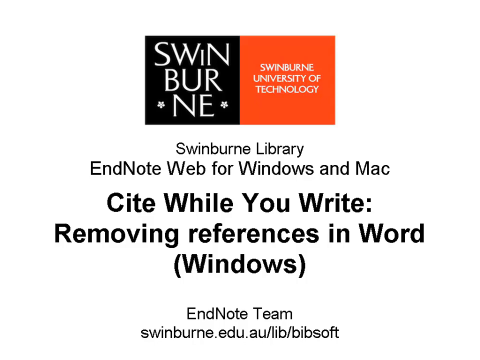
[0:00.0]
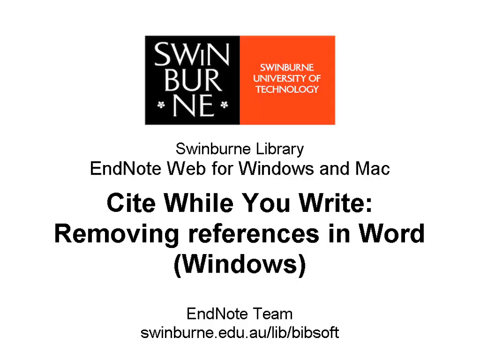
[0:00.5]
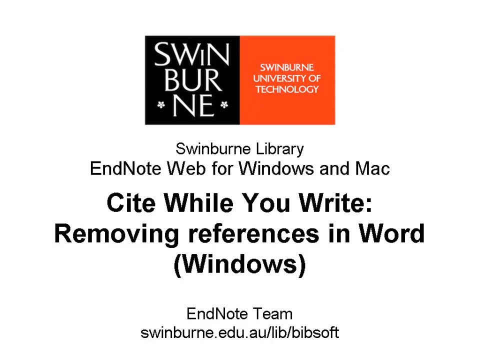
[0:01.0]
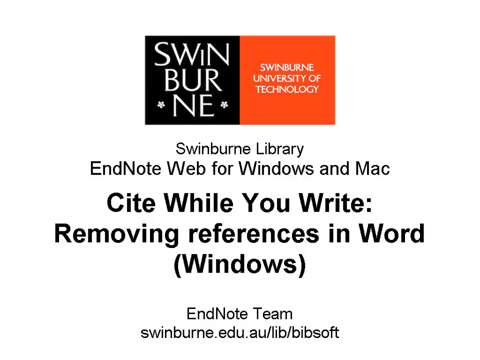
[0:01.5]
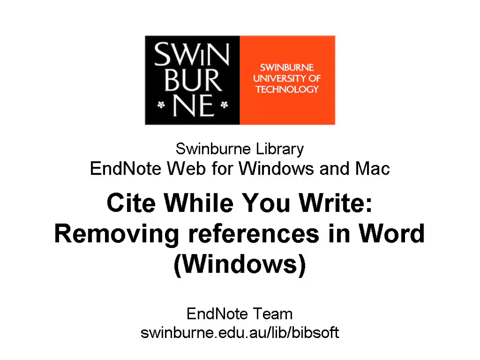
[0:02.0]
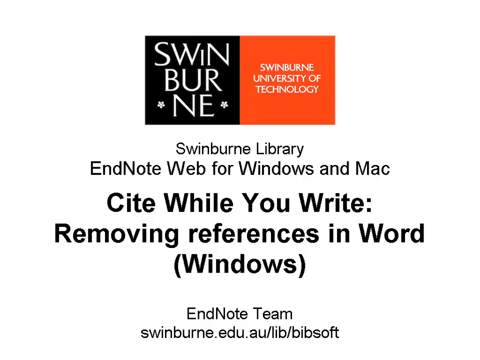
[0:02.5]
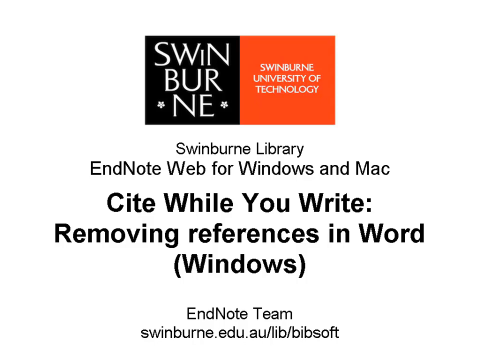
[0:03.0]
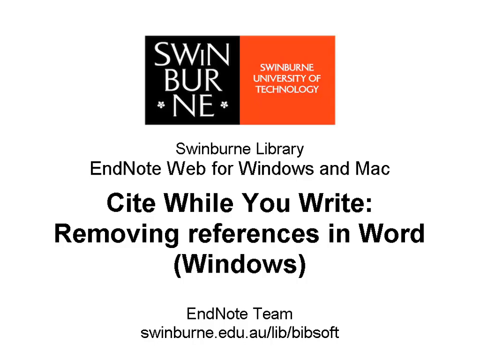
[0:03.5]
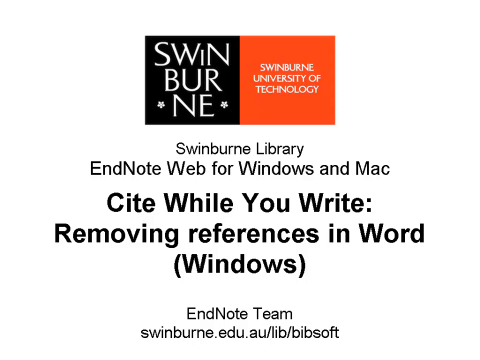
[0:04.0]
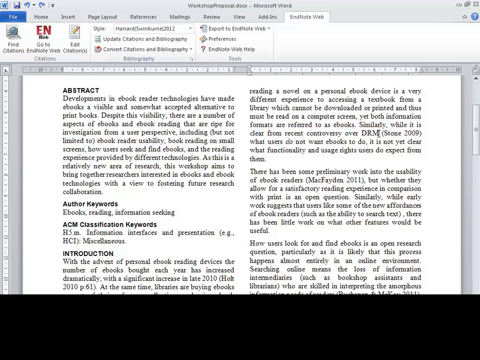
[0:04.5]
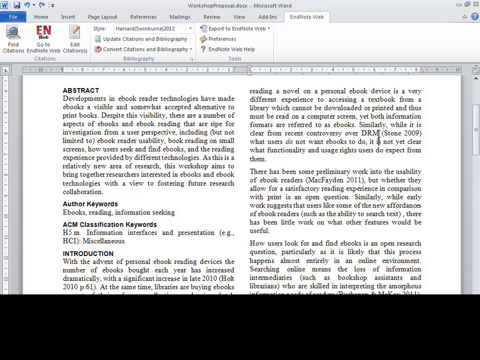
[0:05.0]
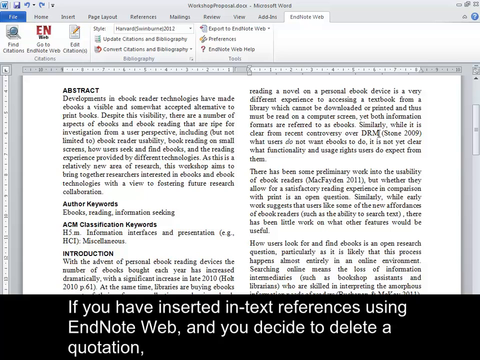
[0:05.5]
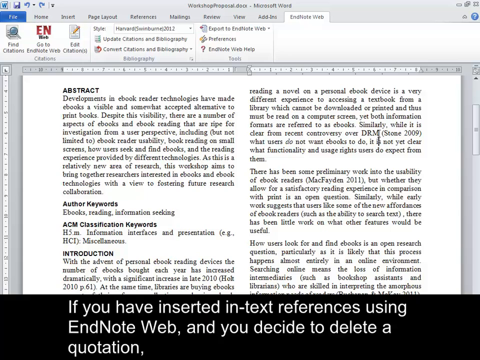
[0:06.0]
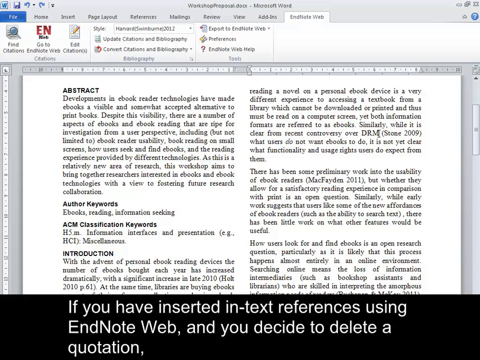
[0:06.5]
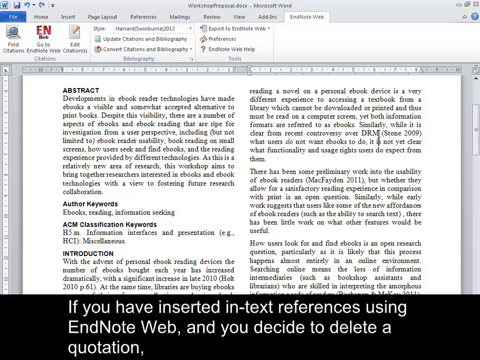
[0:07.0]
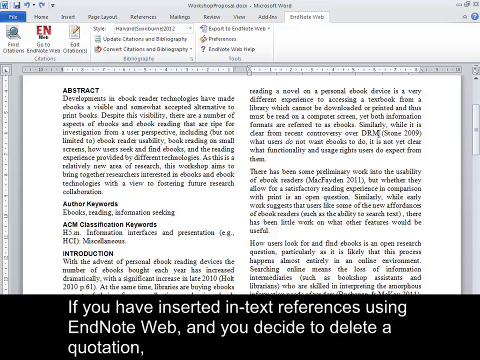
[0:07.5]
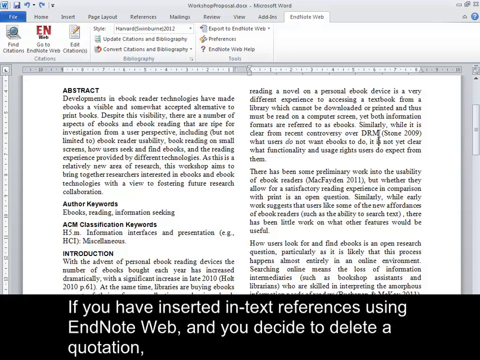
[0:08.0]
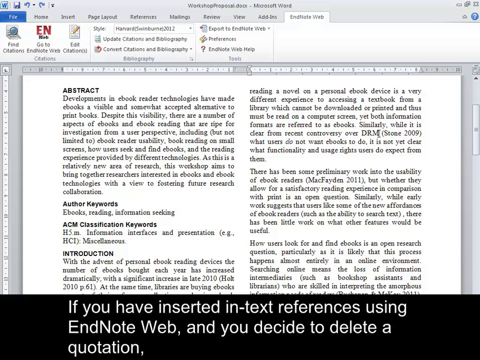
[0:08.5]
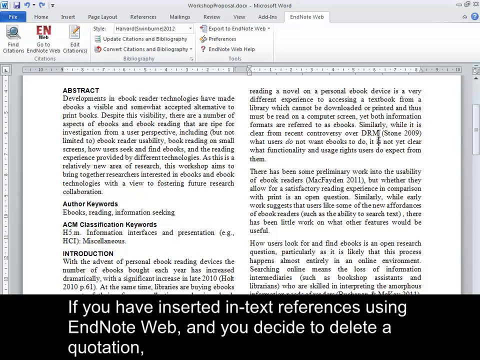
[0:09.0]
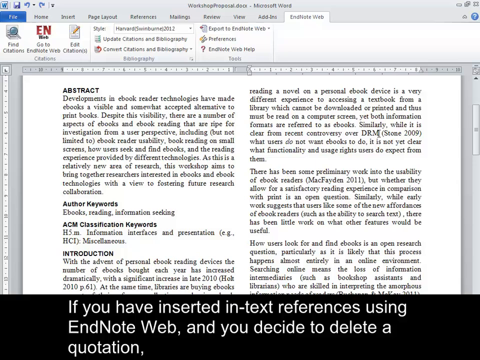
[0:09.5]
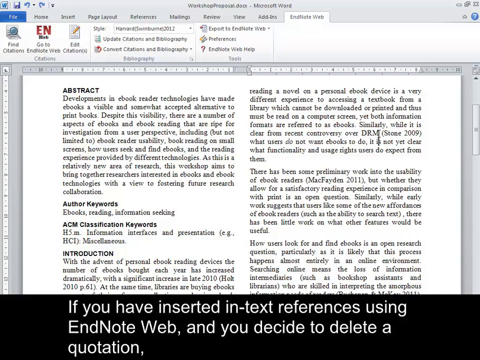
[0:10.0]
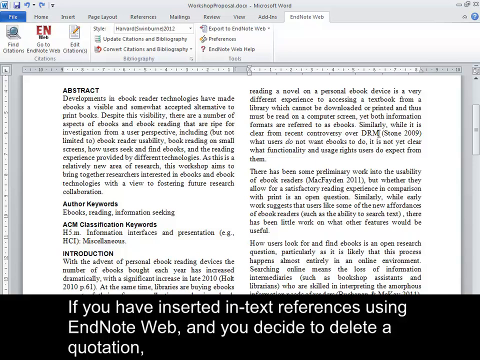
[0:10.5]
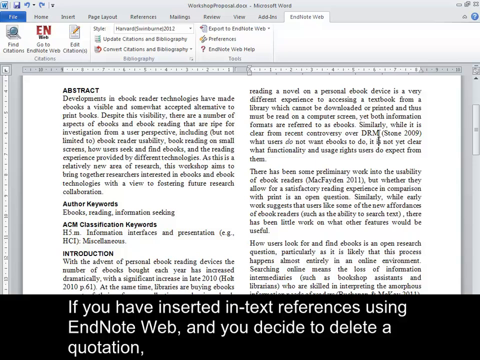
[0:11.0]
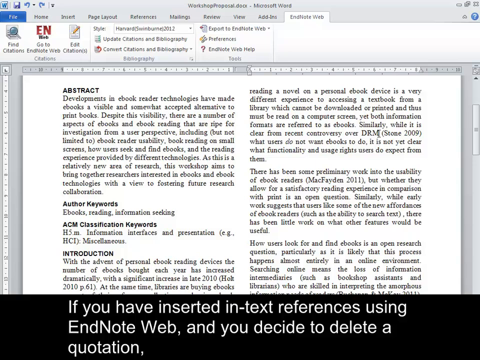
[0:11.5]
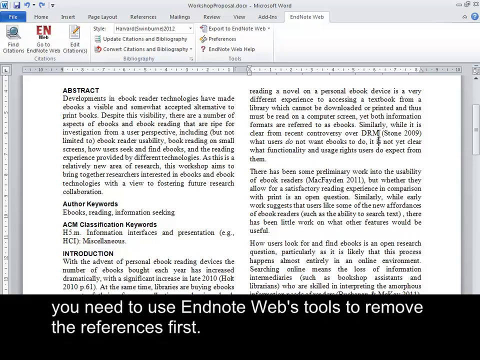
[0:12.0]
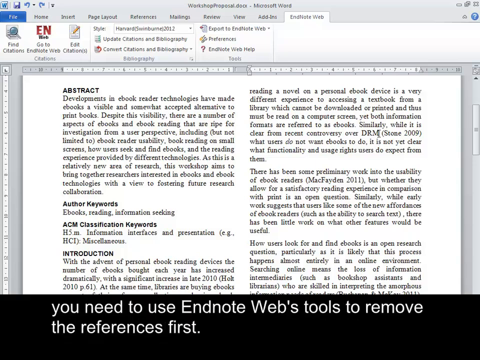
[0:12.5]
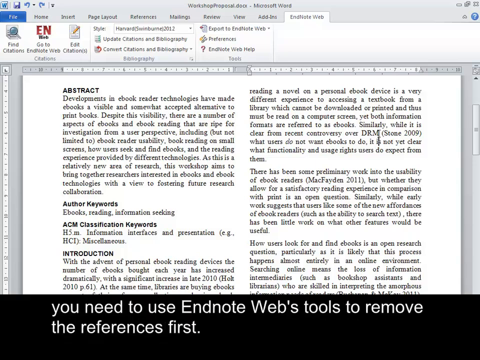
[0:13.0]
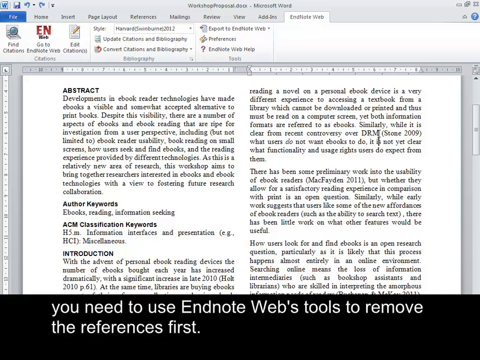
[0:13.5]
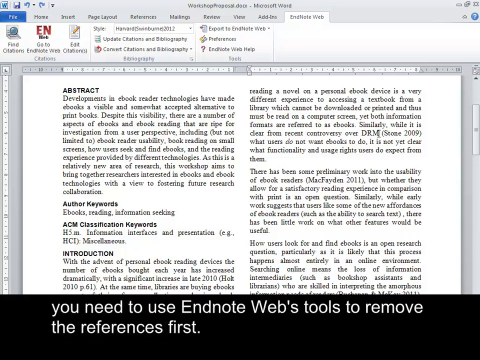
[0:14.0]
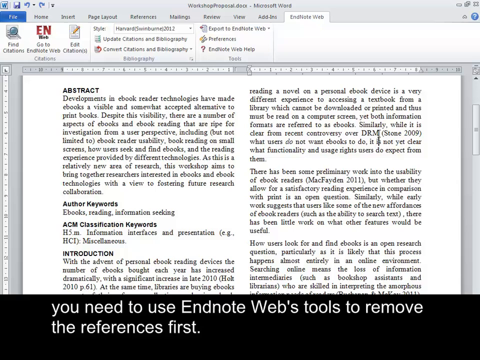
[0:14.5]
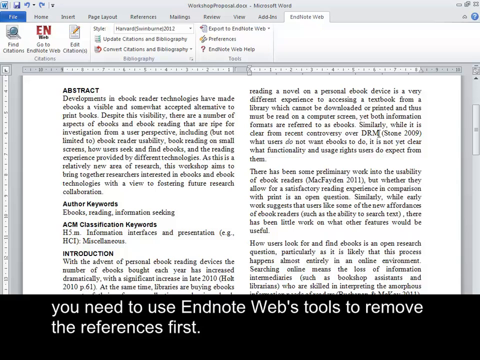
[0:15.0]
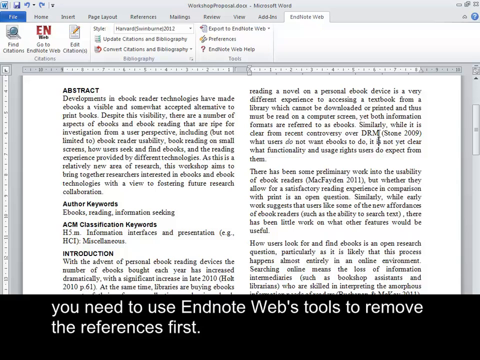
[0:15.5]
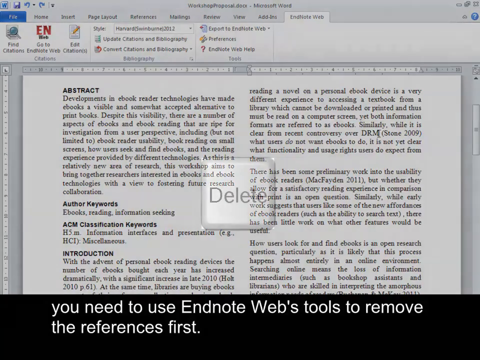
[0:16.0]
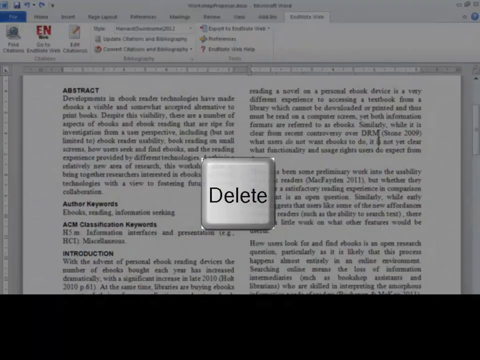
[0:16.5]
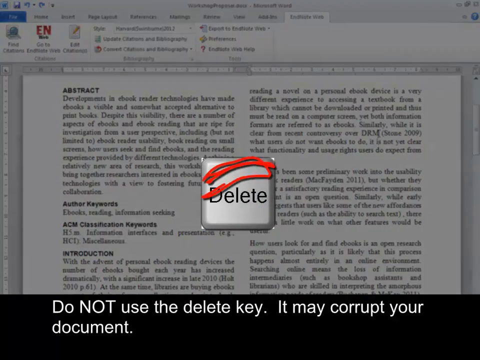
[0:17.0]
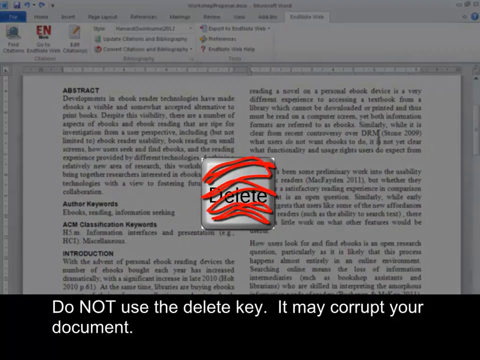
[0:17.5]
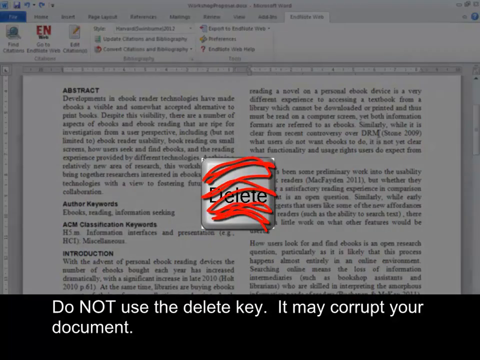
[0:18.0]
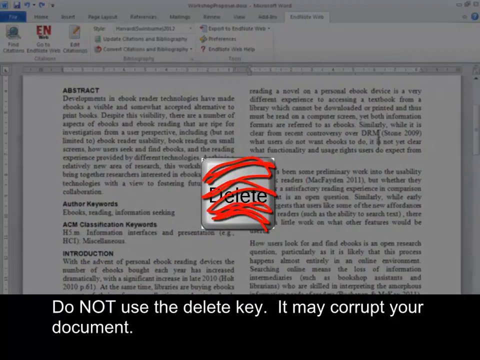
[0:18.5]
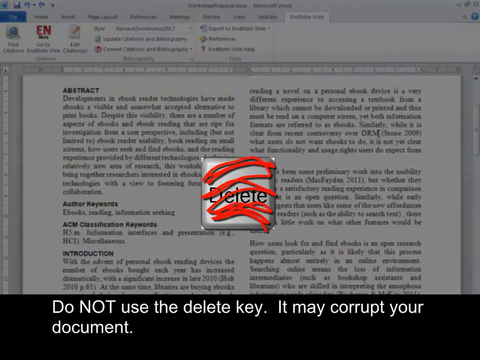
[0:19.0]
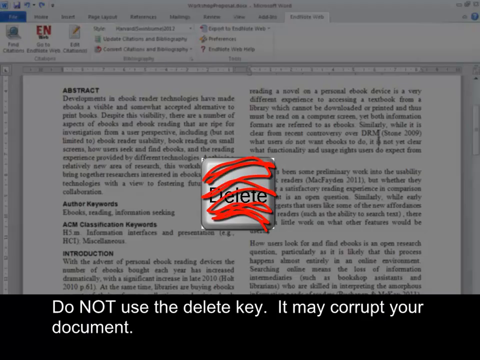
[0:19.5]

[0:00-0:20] The video opens with a title image whose text reads "Swinburne University of Technology", "Swinburne Library", "EndNote Web for Windows and Mac", "Cite while you write" and "removing references in Word, Windows", identifying it as a tutorial on removing references in Word and citing while writing. The view then moves to a Word window containing what appears to be a scientific article, with an abstract, keywords, a classification and an introduction. A black bar at the bottom of the screen carries subtitles reading "If you have inserted in-text references using EndNote Web and you decide to delete a quotation, you need to use EndNote Web's tool to remove the references first." followed by "Now do not use the delete key, it might corrupt your document".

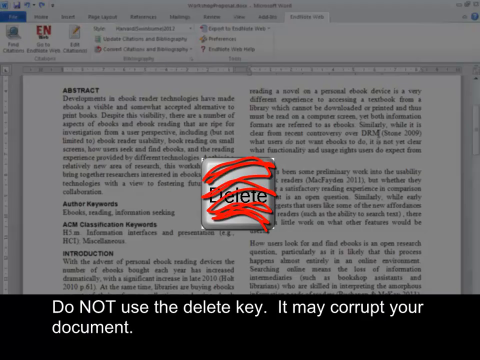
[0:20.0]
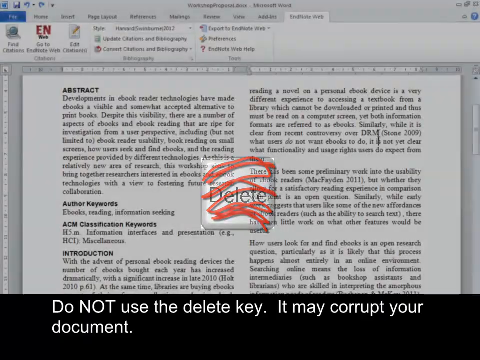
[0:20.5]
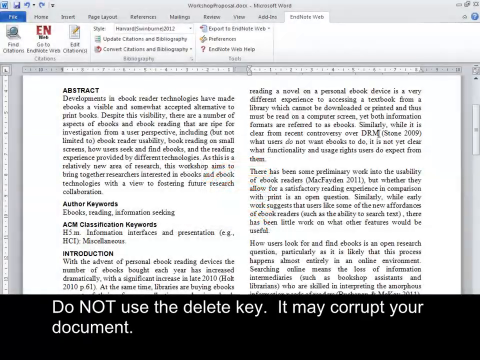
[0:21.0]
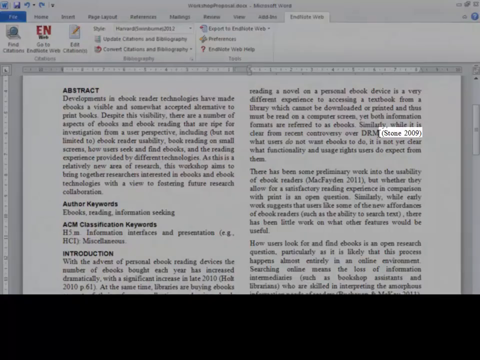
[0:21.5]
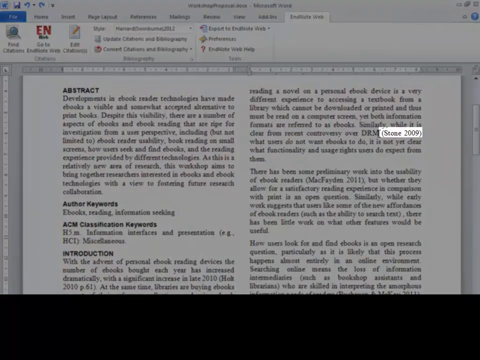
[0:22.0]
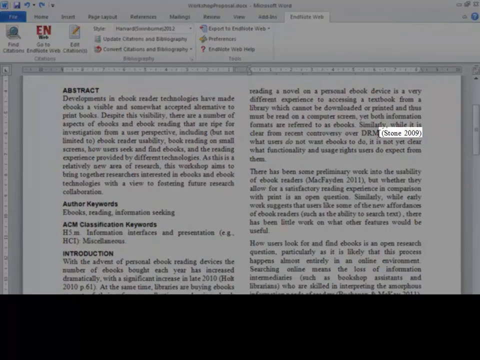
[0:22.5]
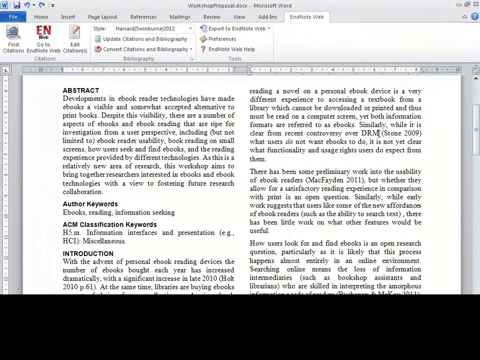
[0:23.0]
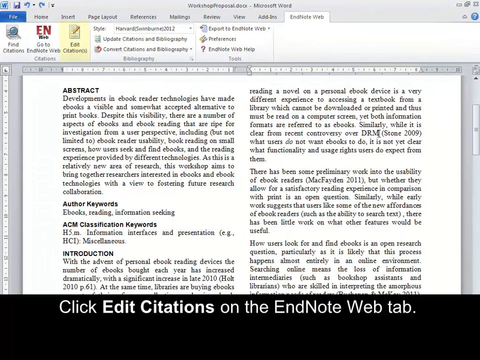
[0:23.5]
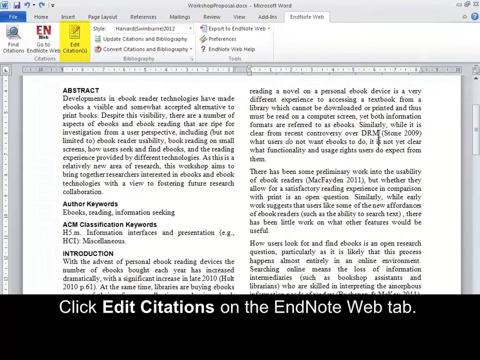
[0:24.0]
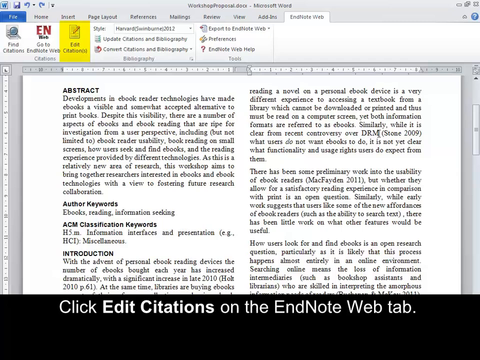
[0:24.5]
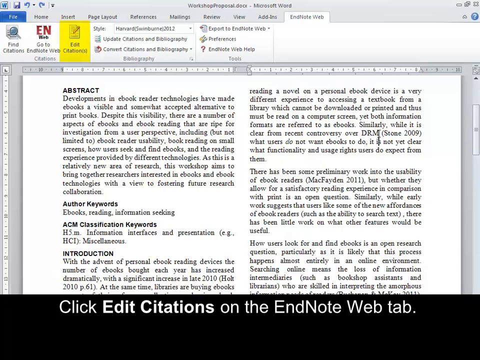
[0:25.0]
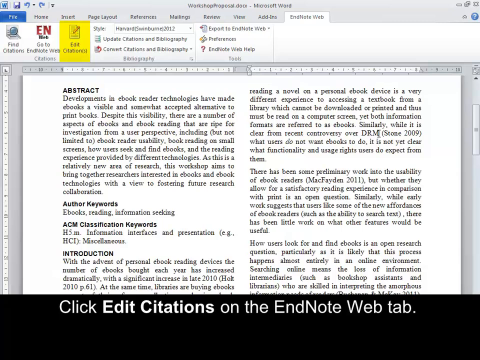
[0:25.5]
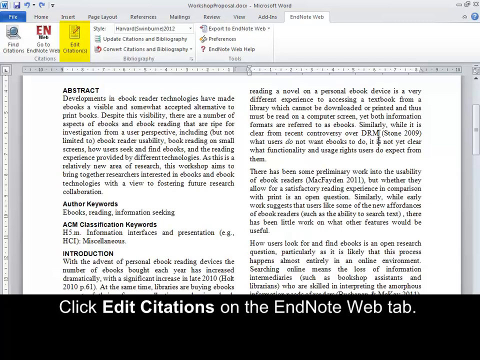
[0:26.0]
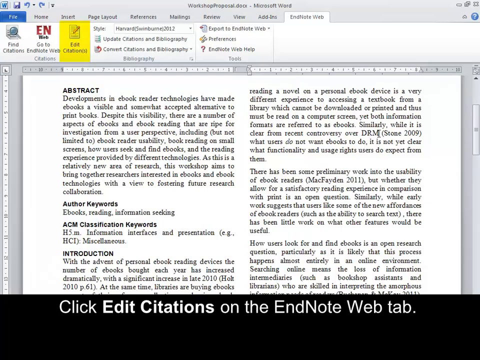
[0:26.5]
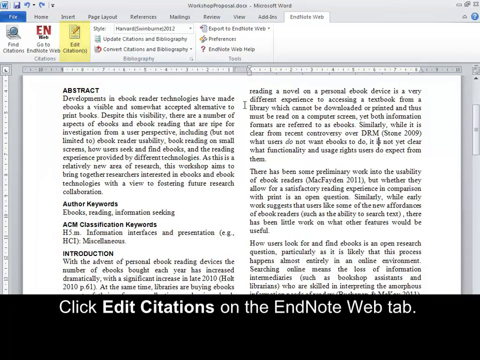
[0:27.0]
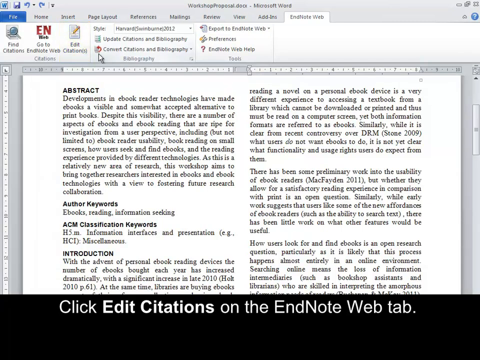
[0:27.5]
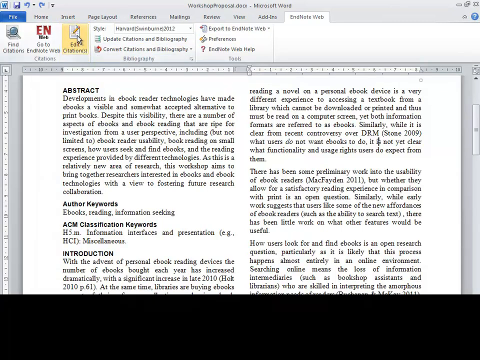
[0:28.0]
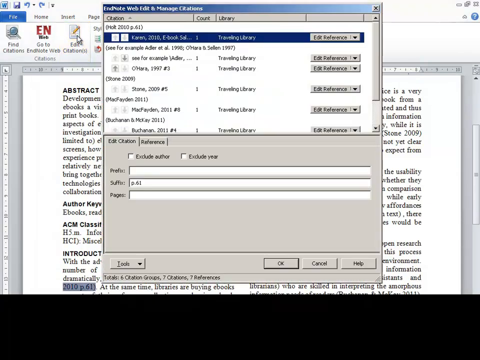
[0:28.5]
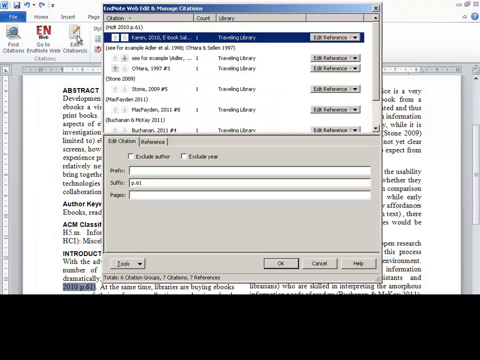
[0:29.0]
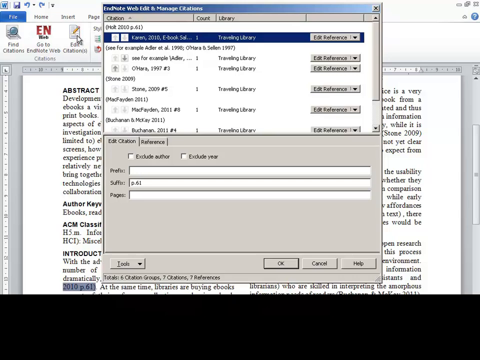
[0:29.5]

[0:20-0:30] In a practical example, a reference in the document is underlined, and the text "Click Edit Citations on the EndNote web tab" appears. The cursor goes to the upper left corner and clicks where it says "Edit Citation". A window appears showing various information about the citations already included in the text of the article.